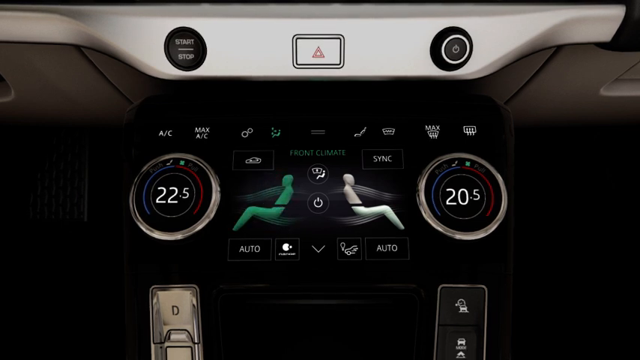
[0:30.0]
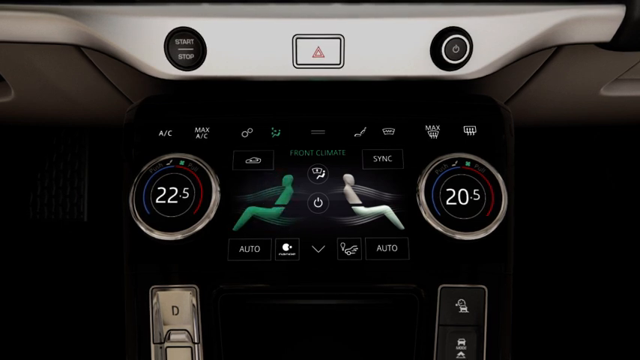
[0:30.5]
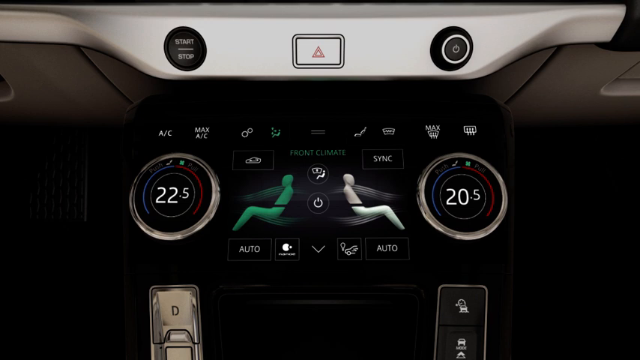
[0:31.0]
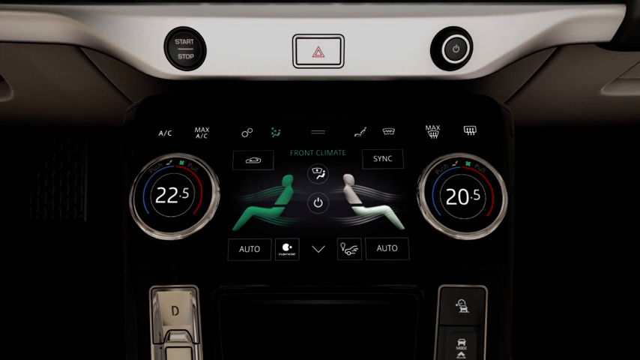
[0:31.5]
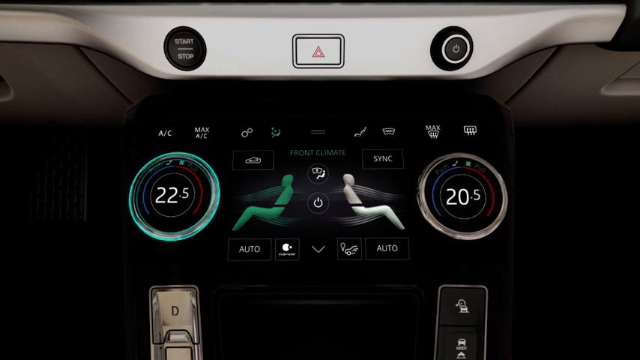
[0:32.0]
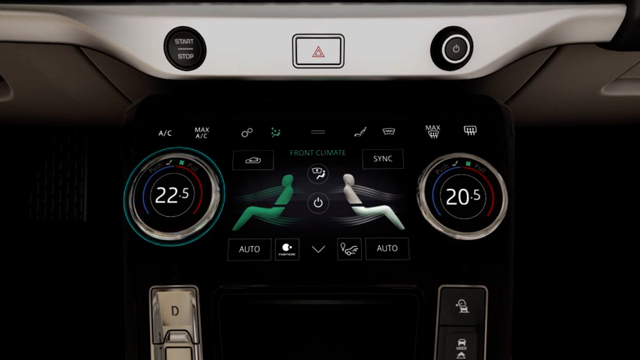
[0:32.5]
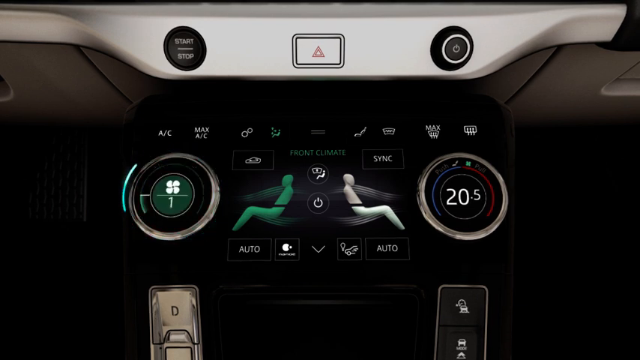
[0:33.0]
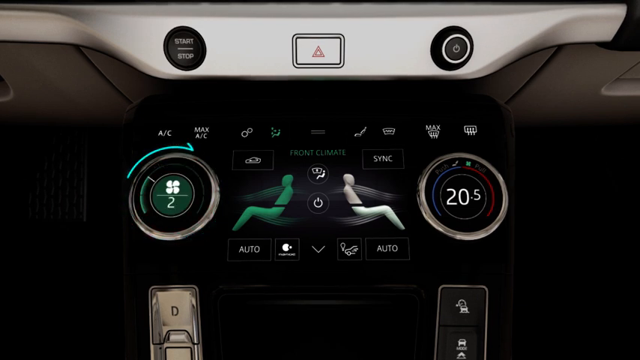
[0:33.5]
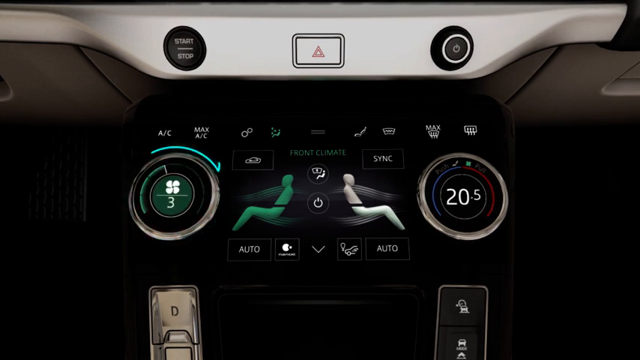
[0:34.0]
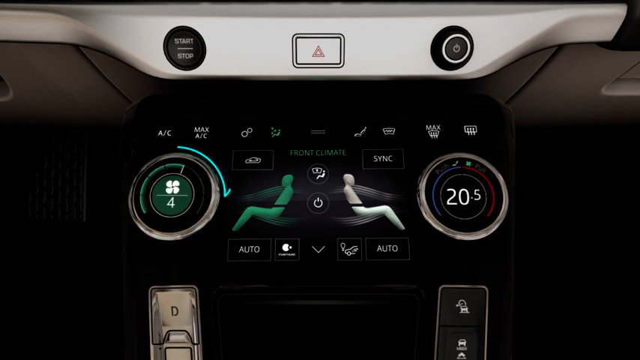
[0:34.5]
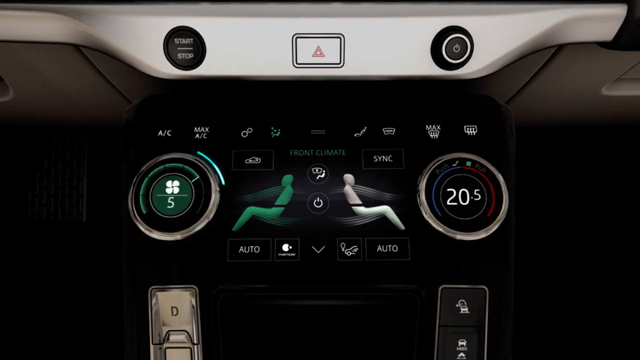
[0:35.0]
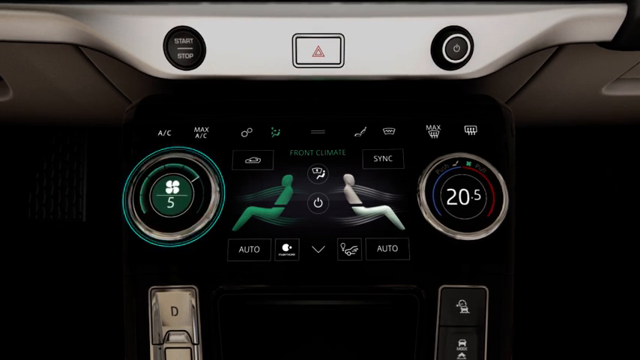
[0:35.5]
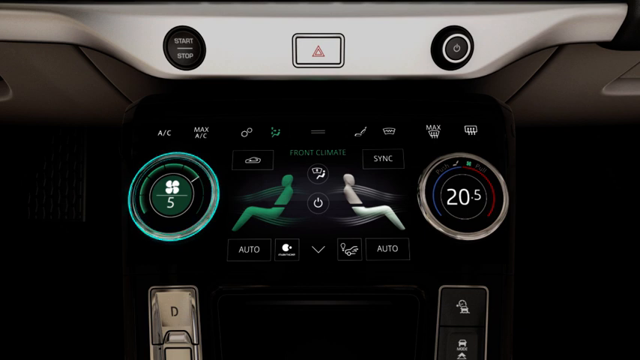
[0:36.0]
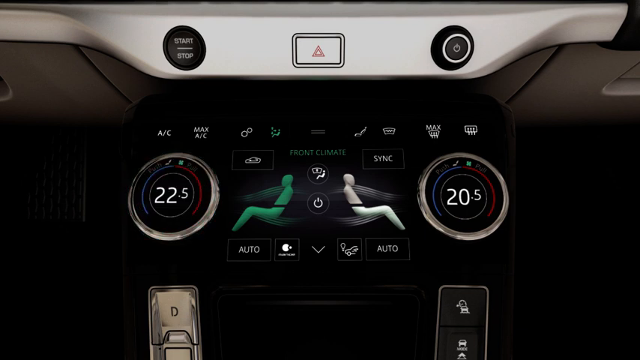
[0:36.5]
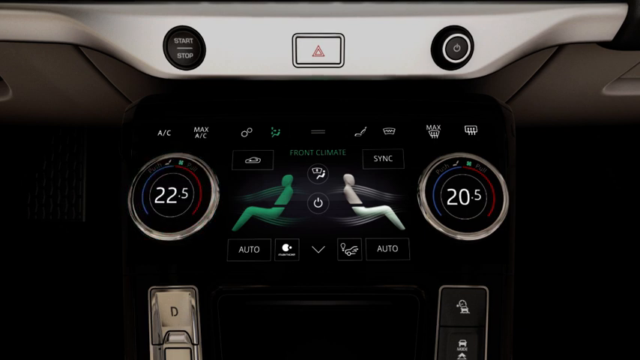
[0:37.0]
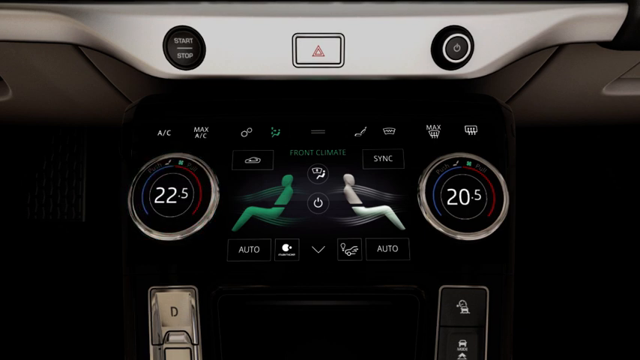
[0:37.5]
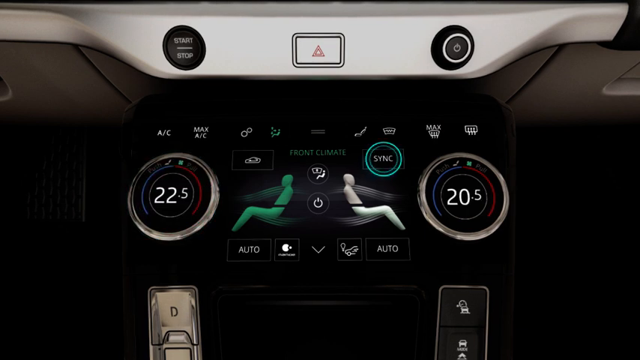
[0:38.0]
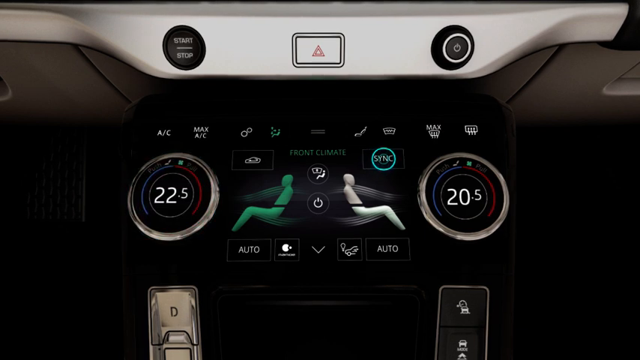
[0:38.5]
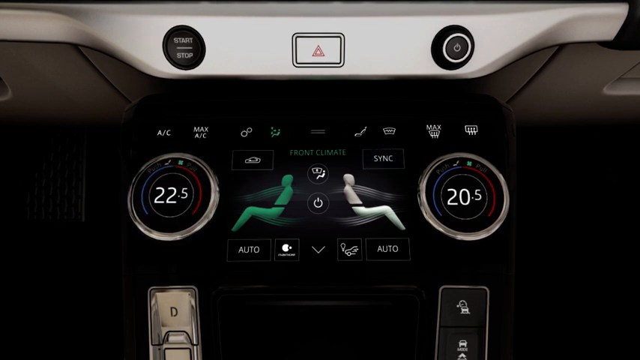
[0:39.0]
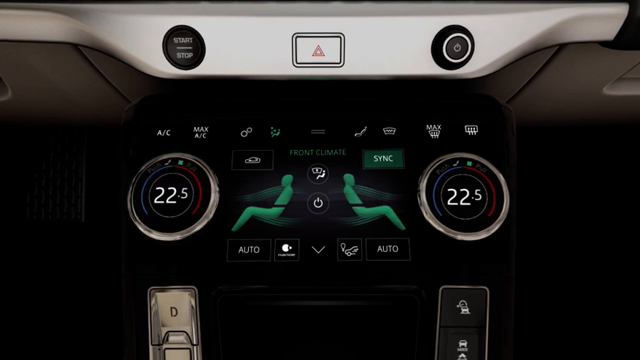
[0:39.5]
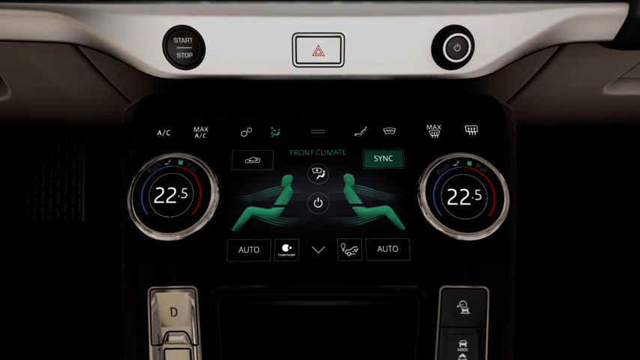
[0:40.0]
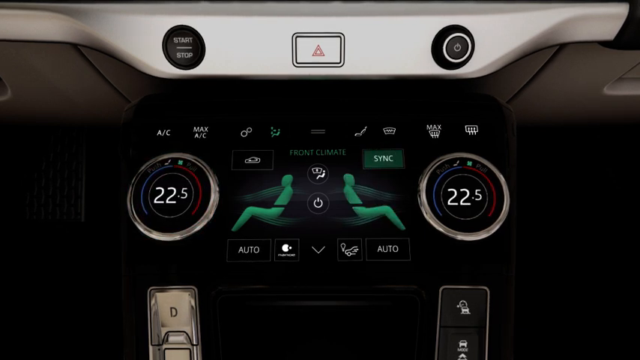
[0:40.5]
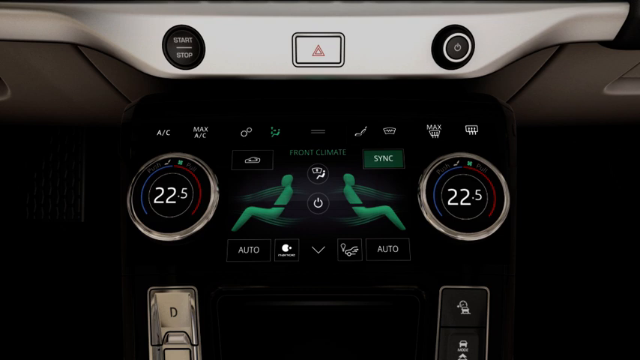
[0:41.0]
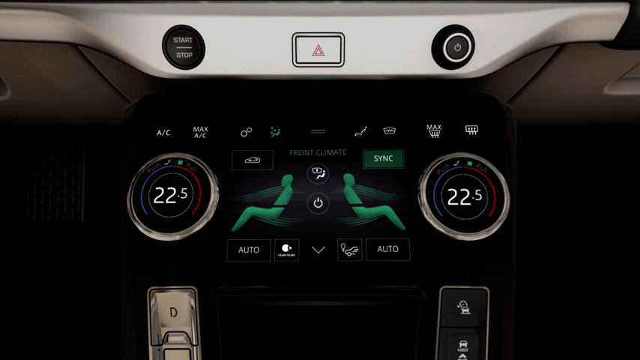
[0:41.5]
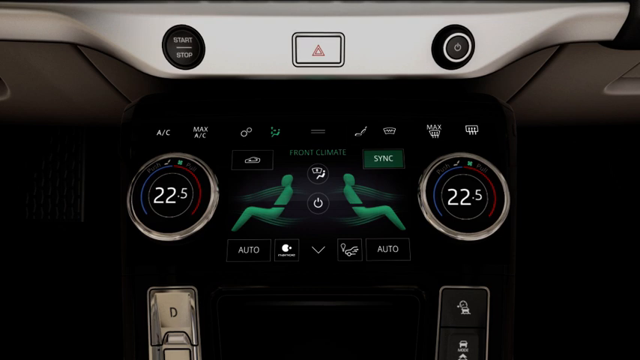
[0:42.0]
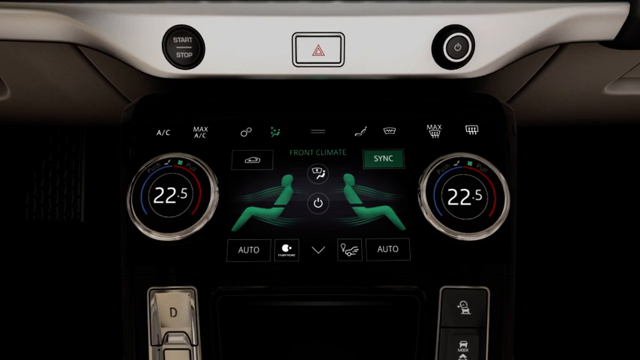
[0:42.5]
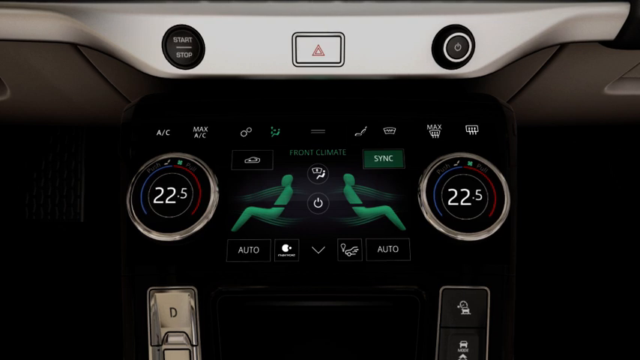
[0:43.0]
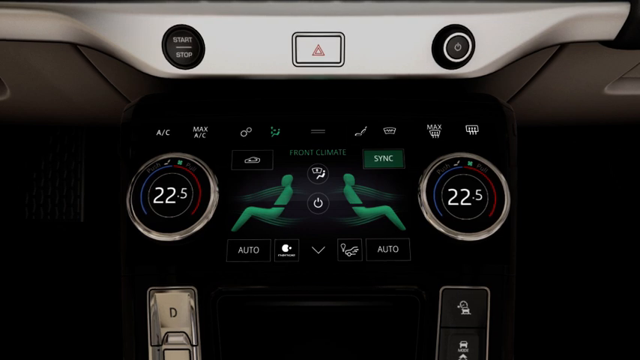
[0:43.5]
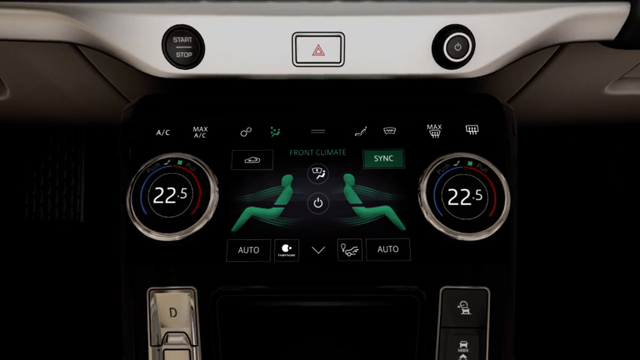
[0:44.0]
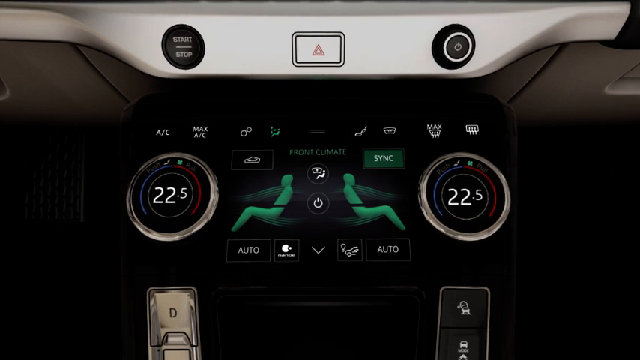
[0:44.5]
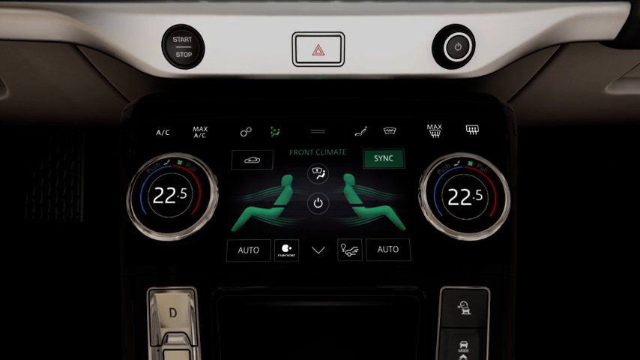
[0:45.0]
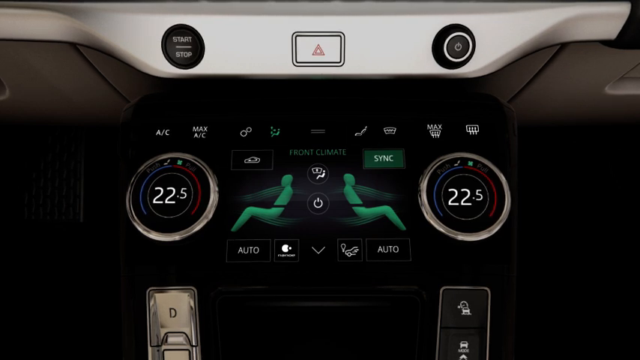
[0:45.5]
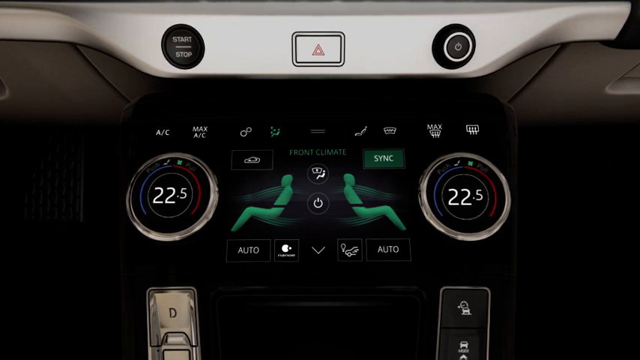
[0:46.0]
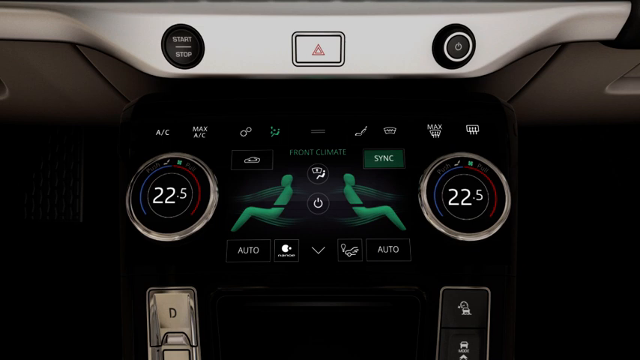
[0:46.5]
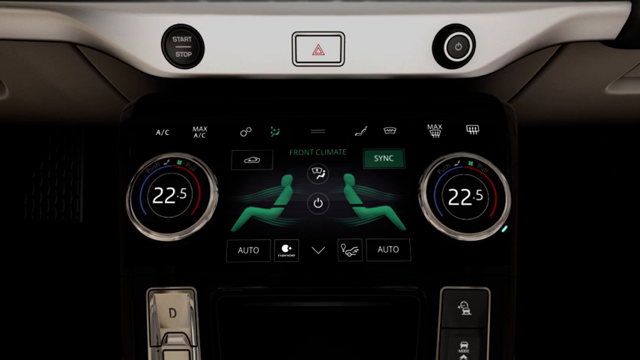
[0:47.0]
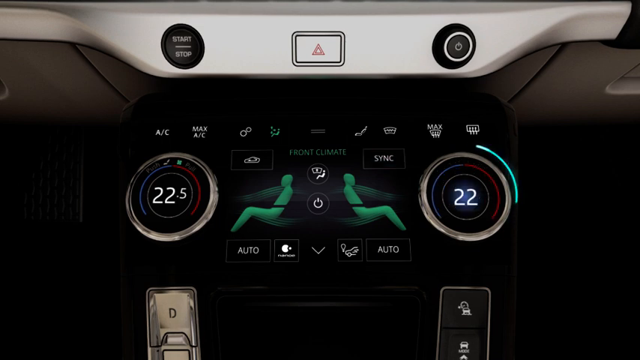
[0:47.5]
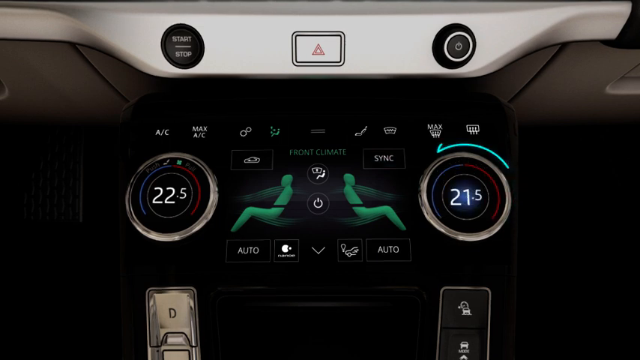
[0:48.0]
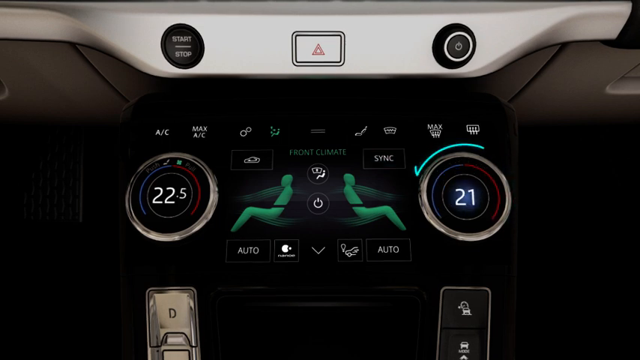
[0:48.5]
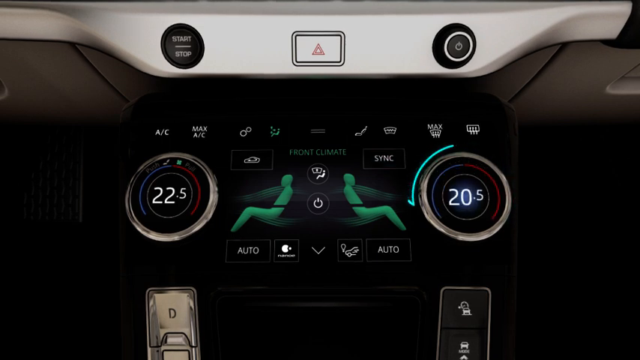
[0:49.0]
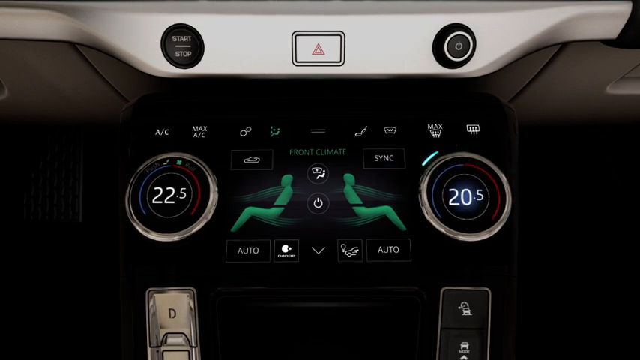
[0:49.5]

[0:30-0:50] A light-colored bar at the top, which protrudes in the middle, might be part of the dashboard. Below it on the left is what may be some sort of opening, like a glove compartment, with a line where it would open, and a pedal below that. On the right-hand side is what might be a handle on a compartment, with no pedals on that side and just a black area below. At the top center, on the left, is a black button with "start" underlined and "stop" below it. In the middle is a rectangular white button with a black outer and inner border; within the inner border is a white background with a red triangle that is red on the outside, then white, then red, with a white insert. To the right on that top bar is what looks like a power button, a circular symbol with a vertical line running from the middle to just outside it. In the central part, below the section that may be attached to the dashboard, is a black unit with a kind of toolbar along its top that reads, from left to right, "AC", then "max AC", then a symbol that looks a bit like a figure of eight with a slightly larger circle on the bottom, pointing diagonally from left to right. Next is a symbol of a green seated man with dots in front of his knees, chest, and face in a triangular pattern moving away from him, then two horizontal lines, one above the other, which may just be decoration. Four more symbols are on the right-hand side of the unit: an unidentified one, a windscreen shape with a wavy line that might be a heated windscreen button, the word "max" with some sort of heating symbol below, and a symbol that apparently also relates to heating. There is a dial on the left-hand side, and a button on the left with a symbol that apparently relates to a fan, underlined, followed by the number one. Next to it is a symbol of a seated passenger looking to the left, then a power button between that symbol and another seated passenger looking to the right. A corresponding dial on the other side has different entries: the word "push" at 11 o'clock, the word "pull" at one o'clock, and the number "20.5". Above the passenger symbols on the left is a horizontal rectangular box with an image of a car. Between the top of that box and the top of a similar box on the right are the words "front climate" in green; the box on the right reads "SYNC".